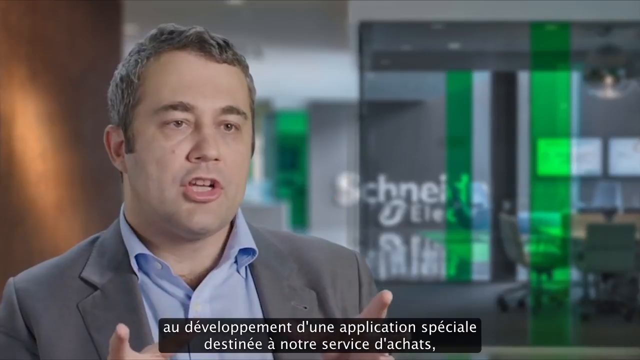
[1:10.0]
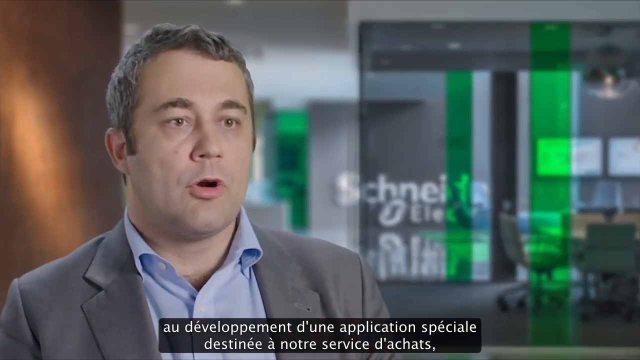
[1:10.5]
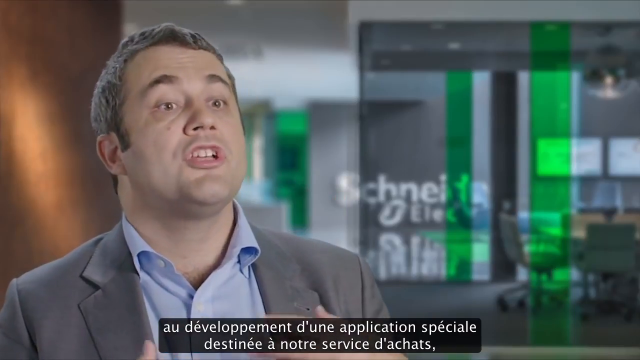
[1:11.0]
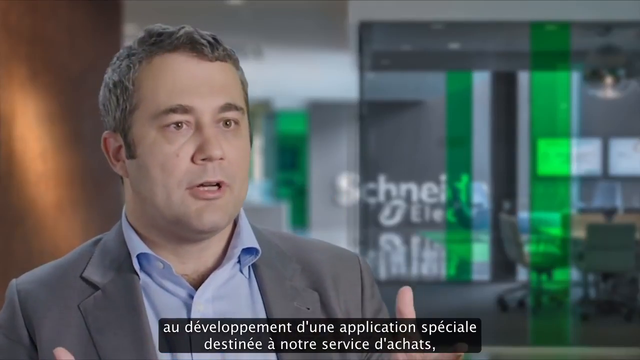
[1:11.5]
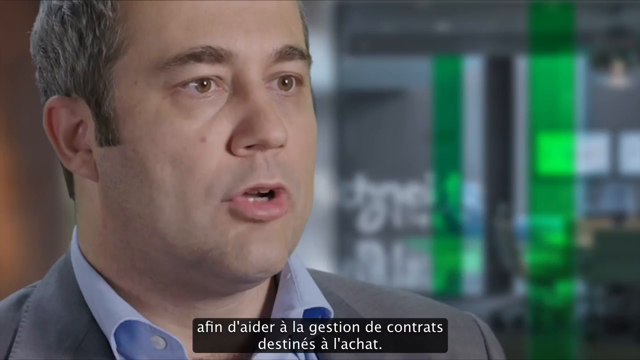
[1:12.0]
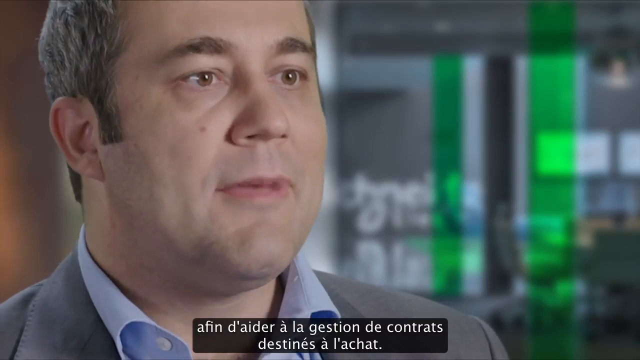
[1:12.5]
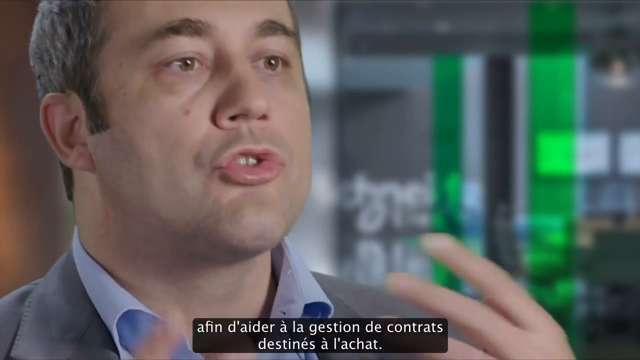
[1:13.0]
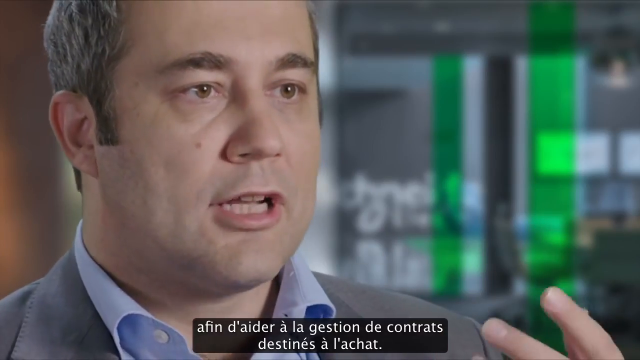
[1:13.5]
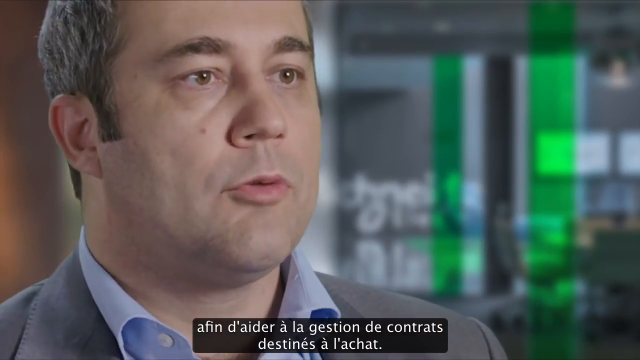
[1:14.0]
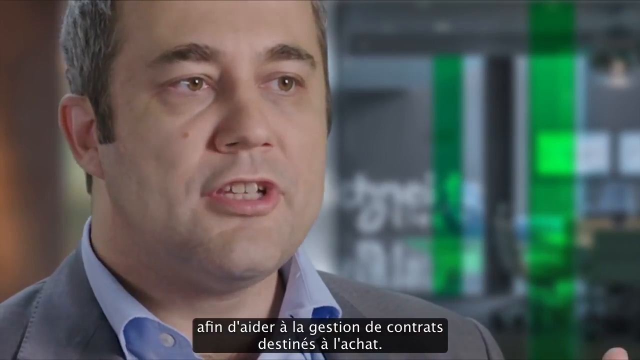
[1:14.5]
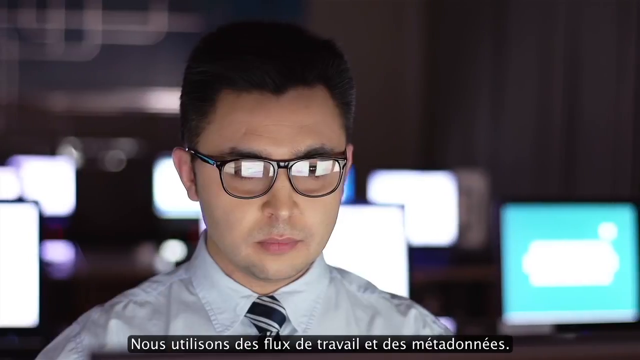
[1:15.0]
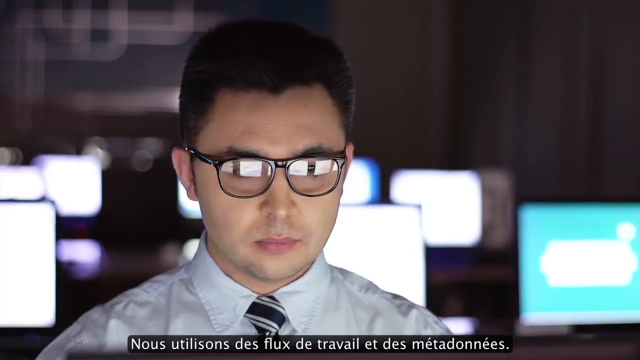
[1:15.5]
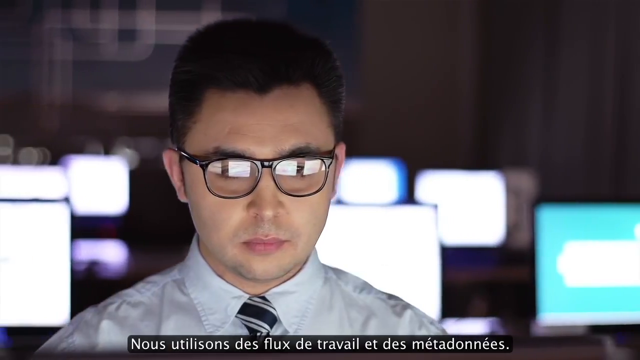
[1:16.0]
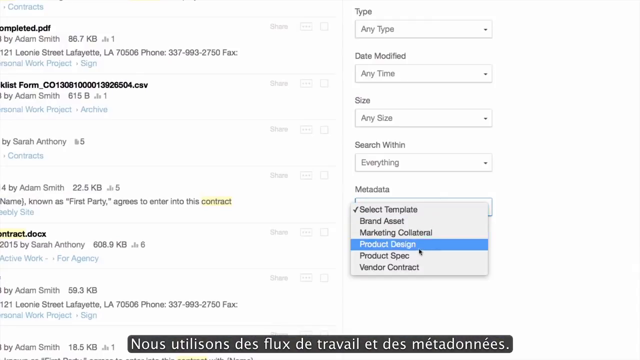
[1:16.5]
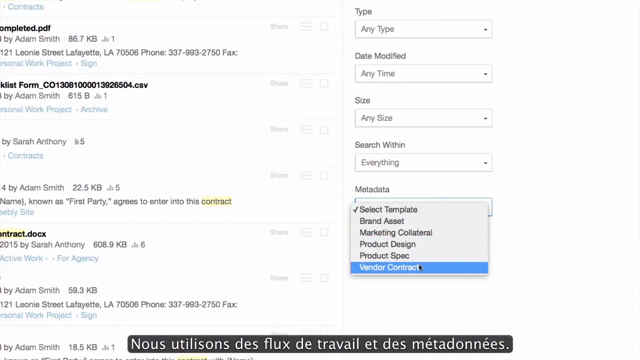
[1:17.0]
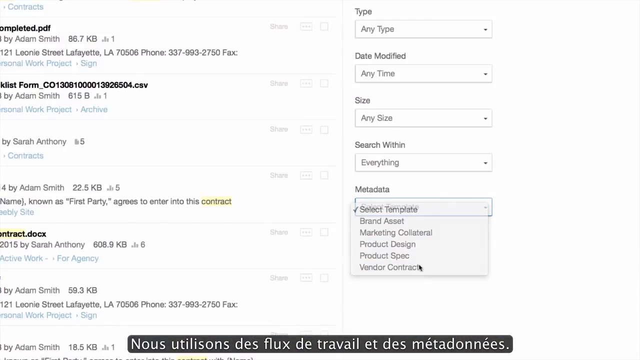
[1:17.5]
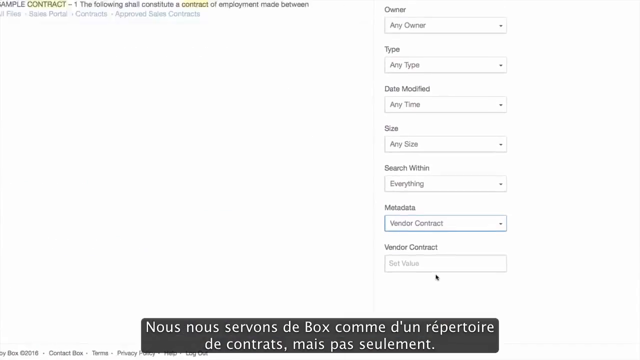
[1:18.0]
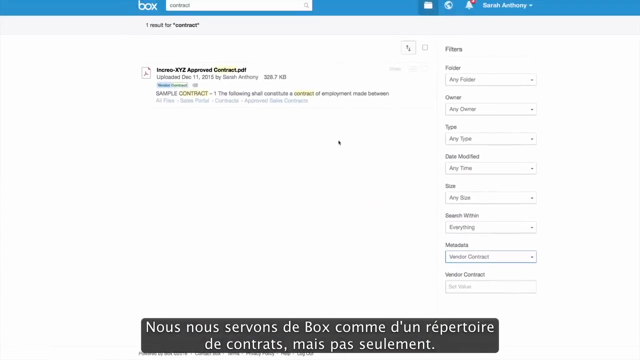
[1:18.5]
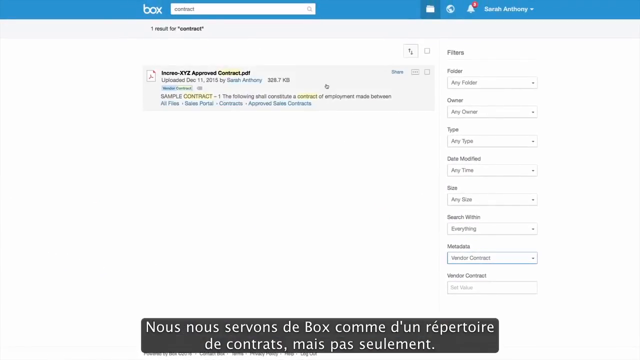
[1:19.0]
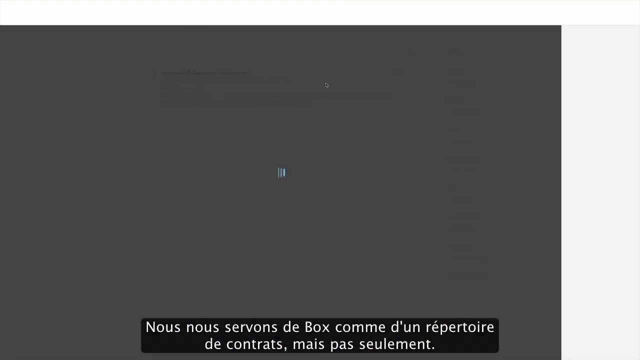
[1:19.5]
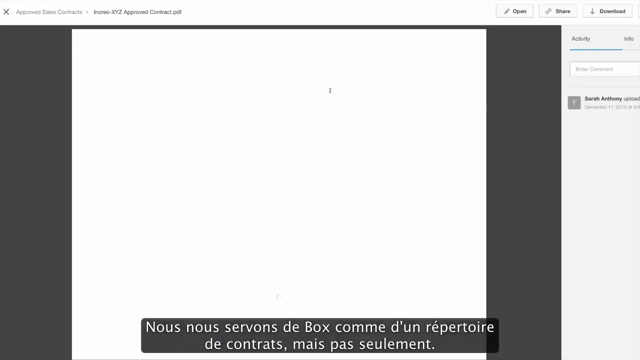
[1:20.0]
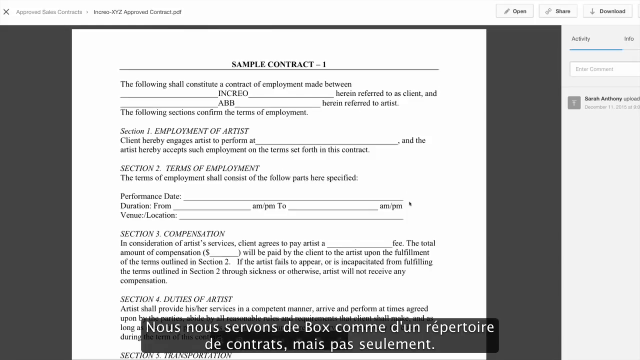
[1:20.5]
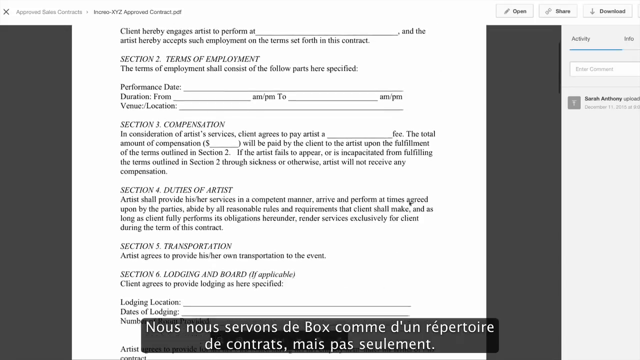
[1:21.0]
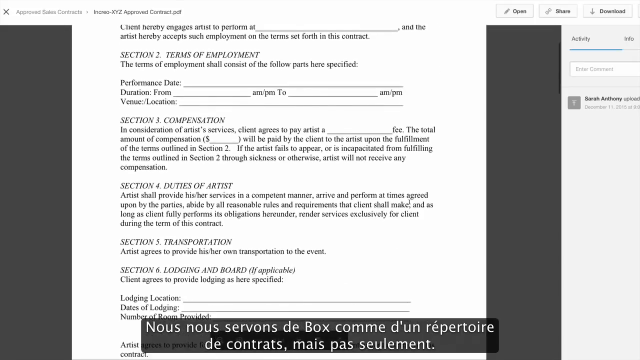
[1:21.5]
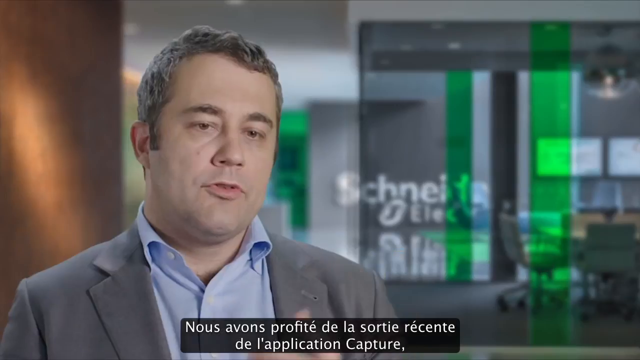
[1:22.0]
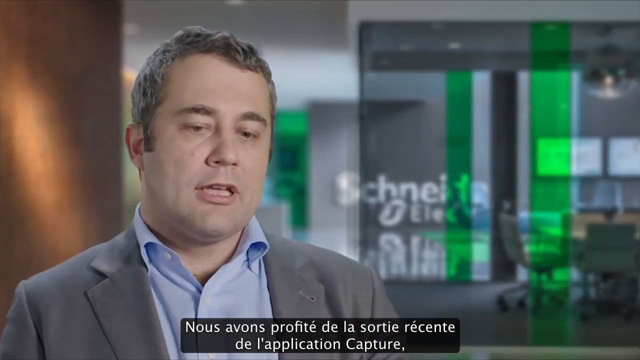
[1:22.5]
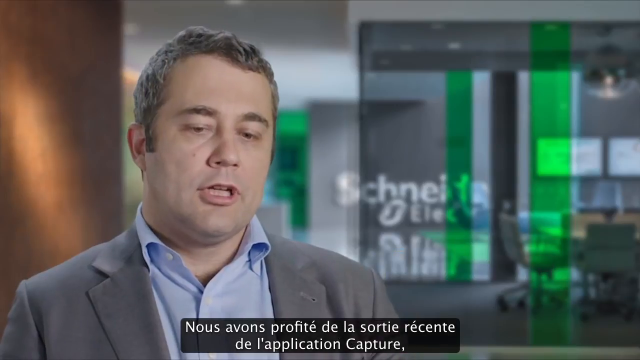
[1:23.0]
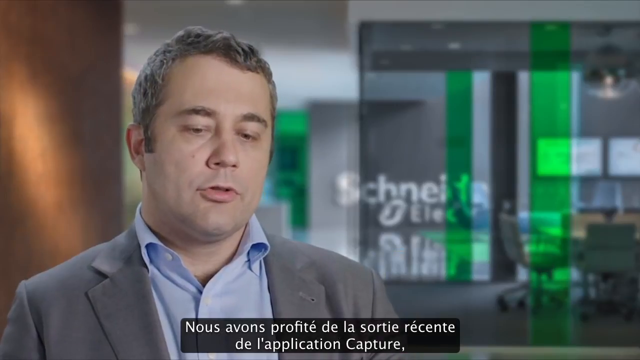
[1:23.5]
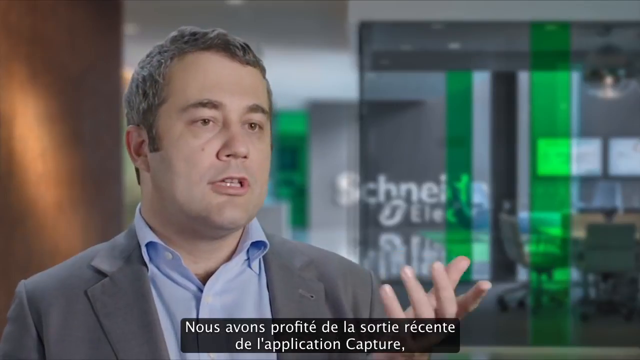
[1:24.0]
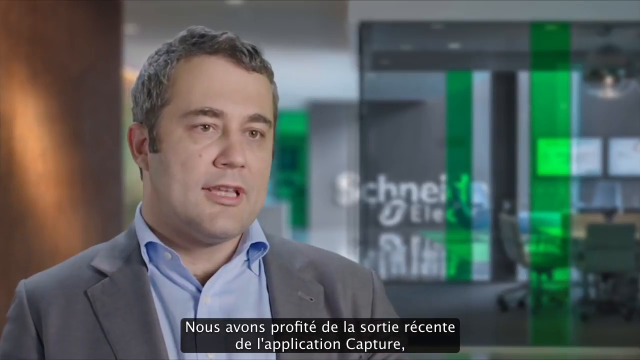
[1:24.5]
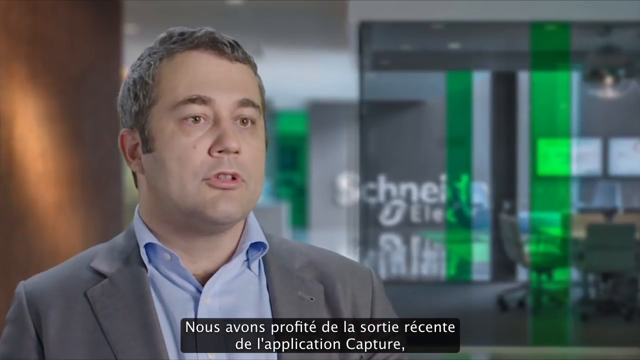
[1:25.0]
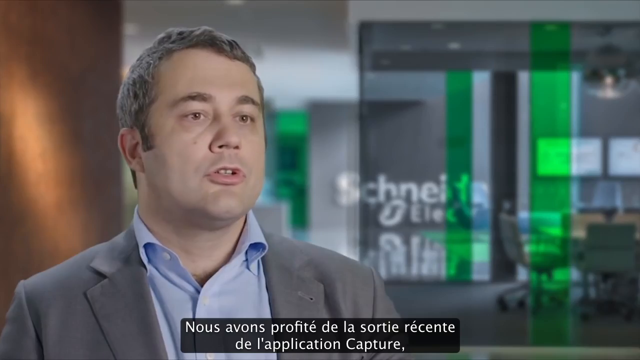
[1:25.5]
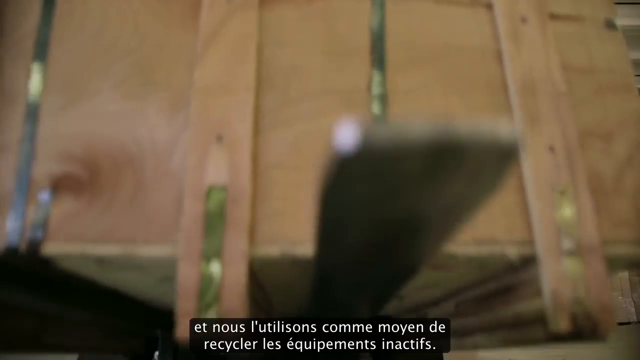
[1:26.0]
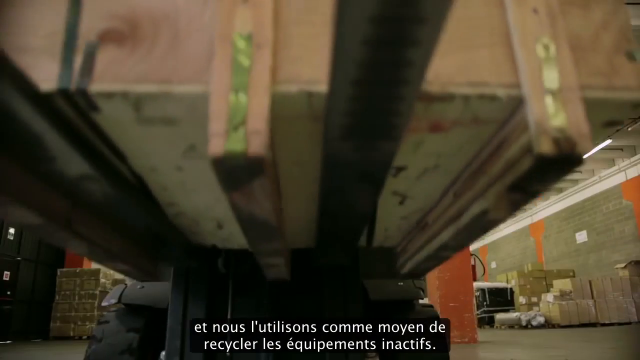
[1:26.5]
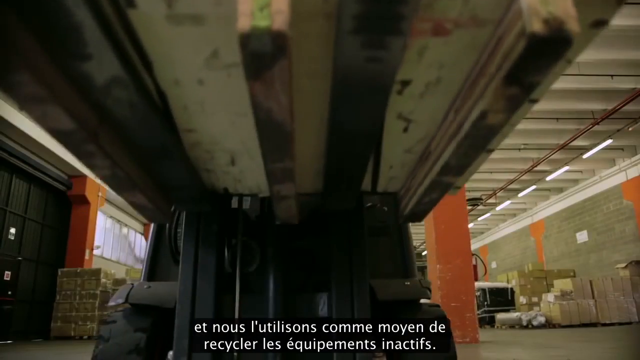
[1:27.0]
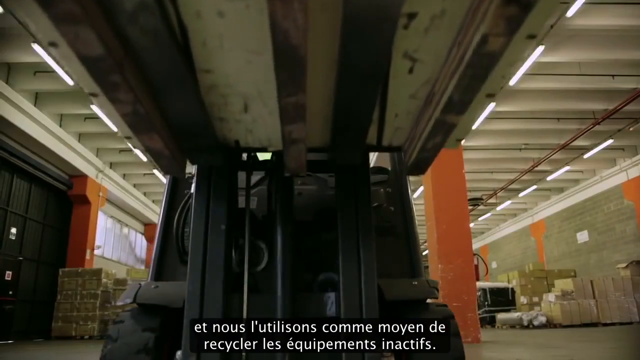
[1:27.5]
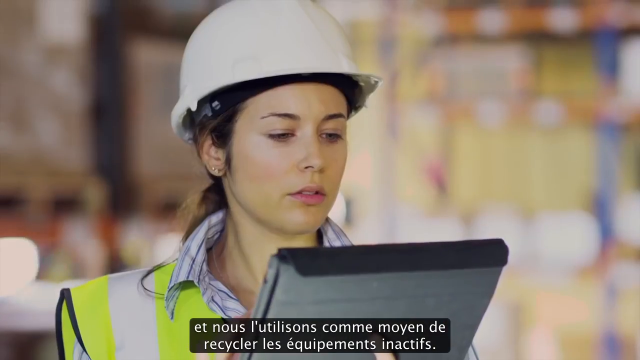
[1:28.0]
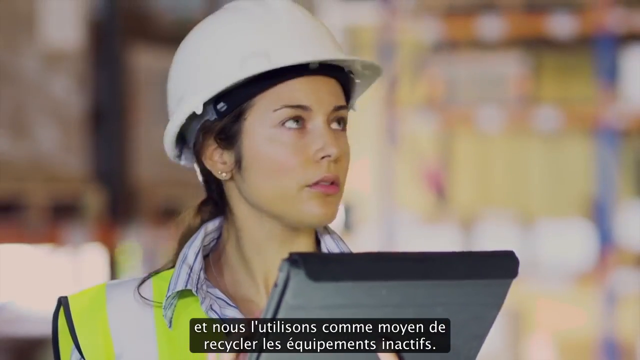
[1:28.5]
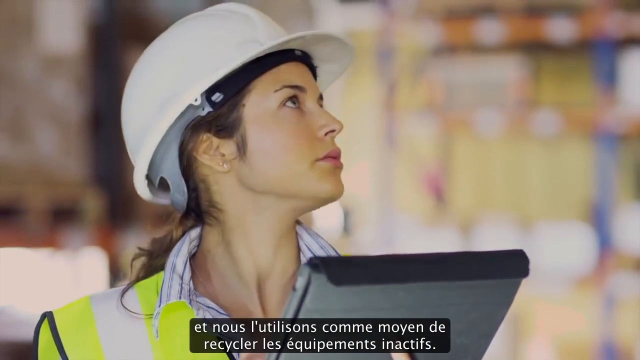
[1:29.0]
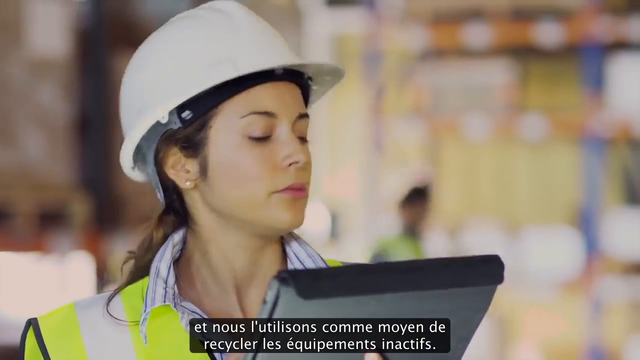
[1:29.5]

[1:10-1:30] The man is still shown talking and explaining. Another man is shown working, along with what he is working on on his computer, and he then executes what looks like a contract that needs to be signed. The talking man continues, appearing very concerned. Next there are machines and people working in an industrial setting, putting on safety uniforms and helmets, and a woman holding a laptop is also shown. The man returns and talks again, and then another man is shown working on his laptop, looking very busy.